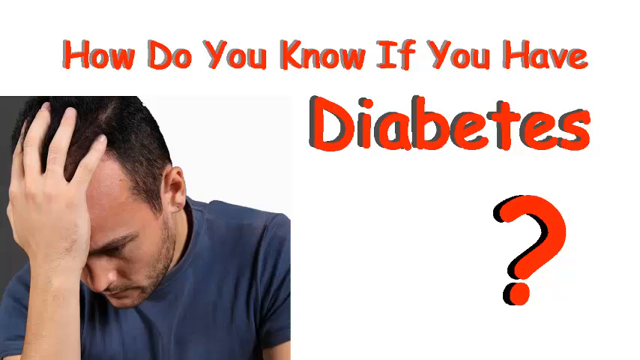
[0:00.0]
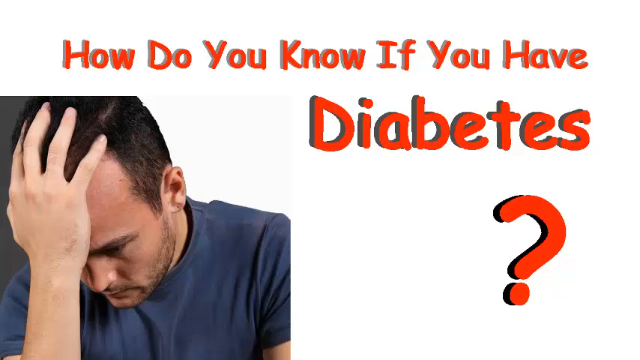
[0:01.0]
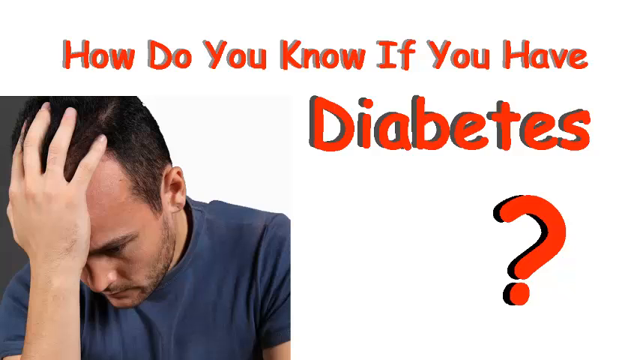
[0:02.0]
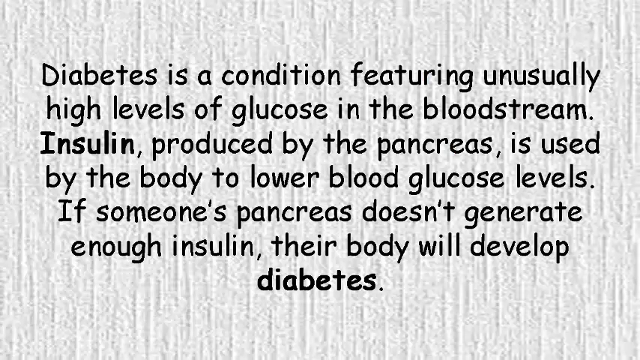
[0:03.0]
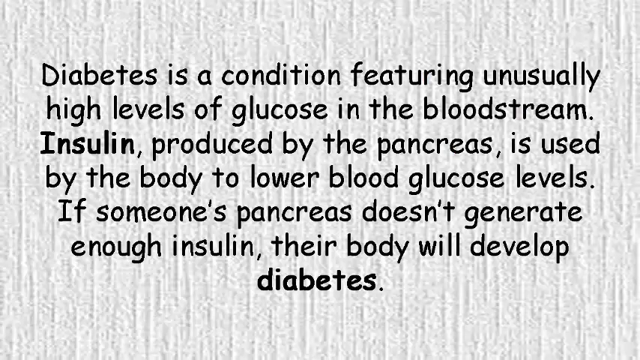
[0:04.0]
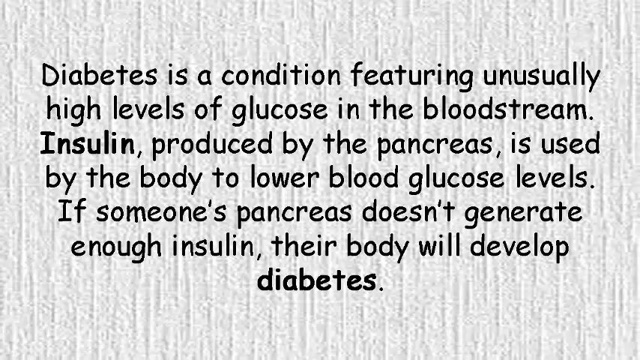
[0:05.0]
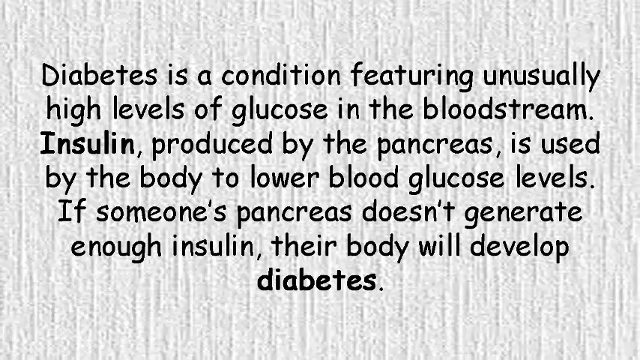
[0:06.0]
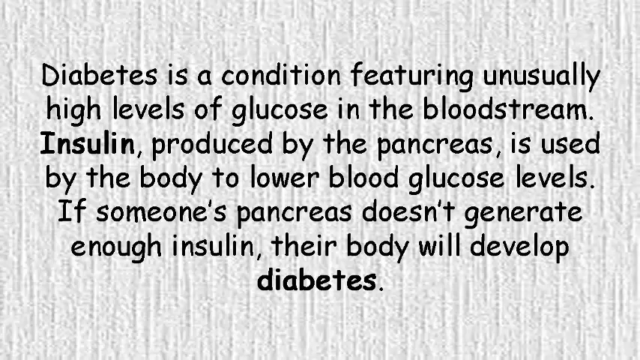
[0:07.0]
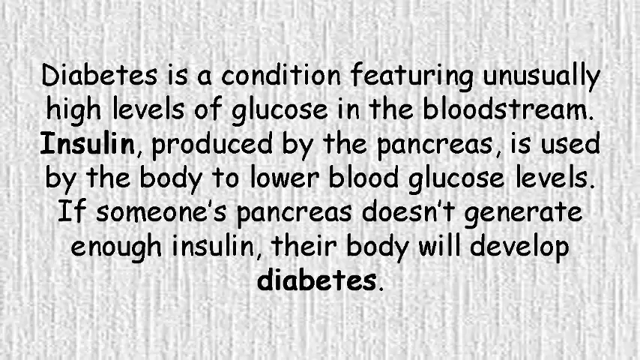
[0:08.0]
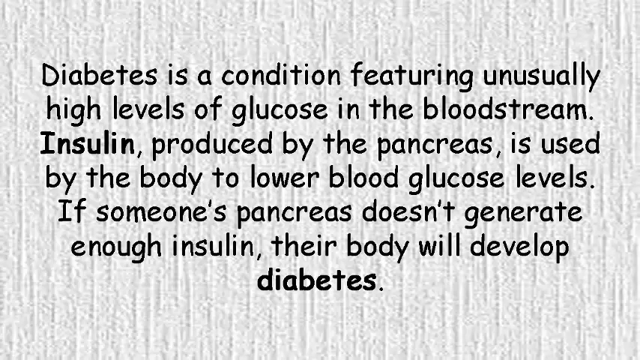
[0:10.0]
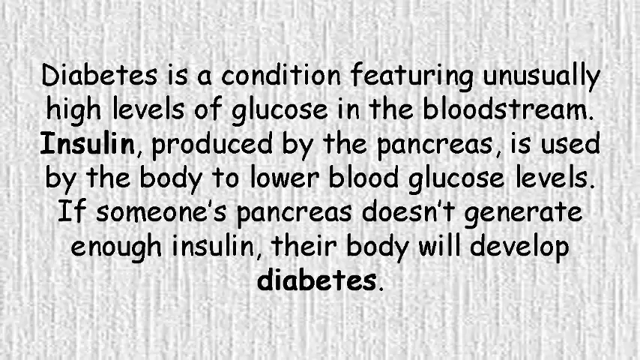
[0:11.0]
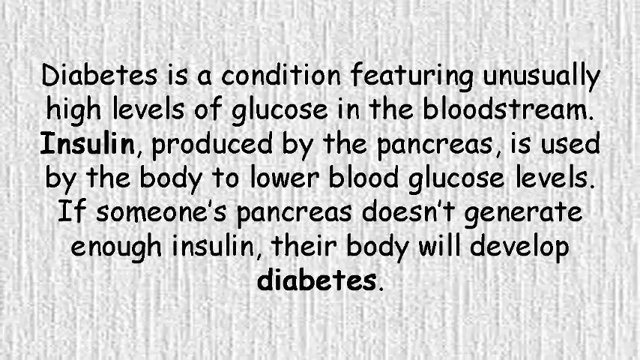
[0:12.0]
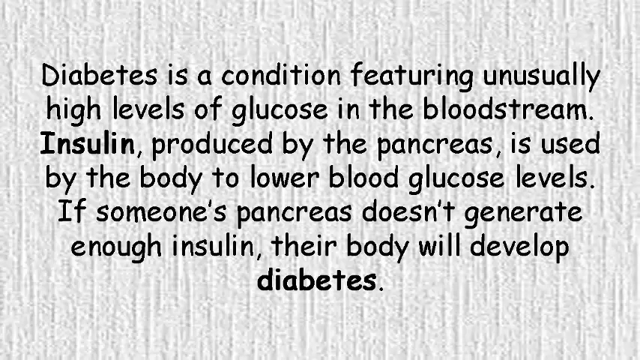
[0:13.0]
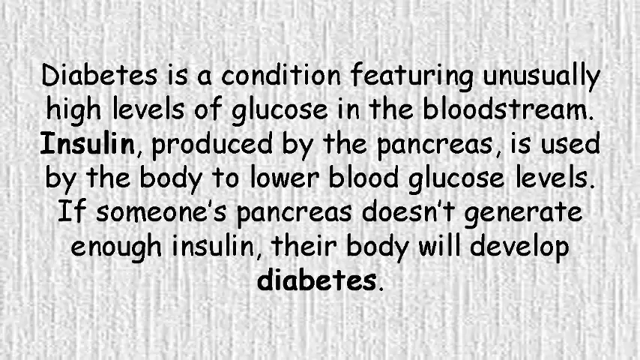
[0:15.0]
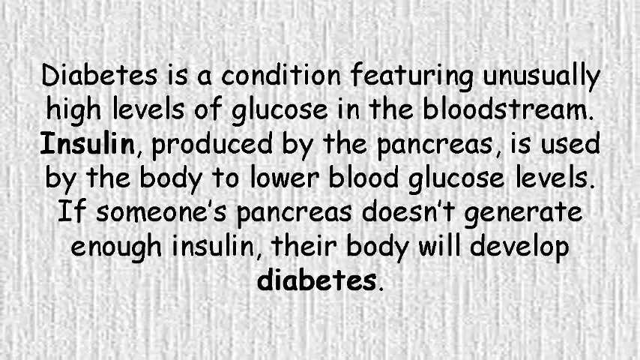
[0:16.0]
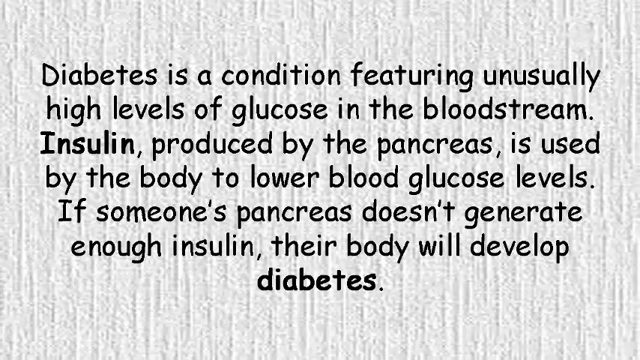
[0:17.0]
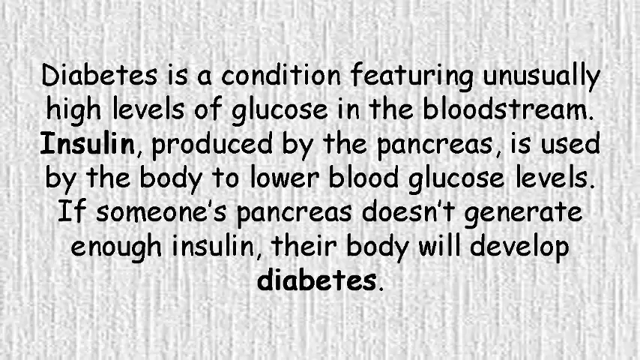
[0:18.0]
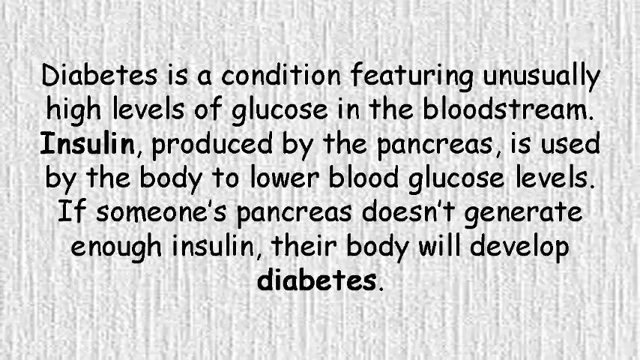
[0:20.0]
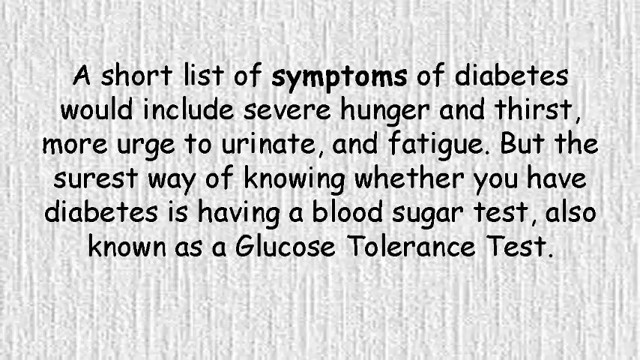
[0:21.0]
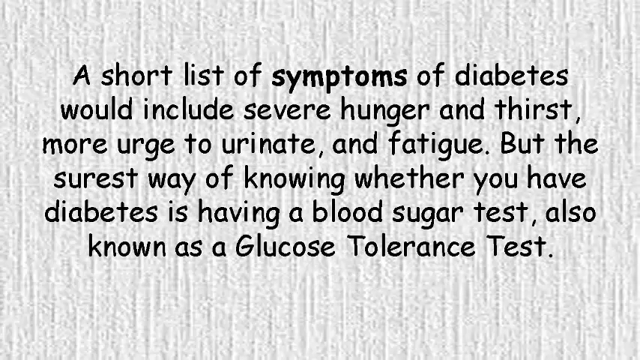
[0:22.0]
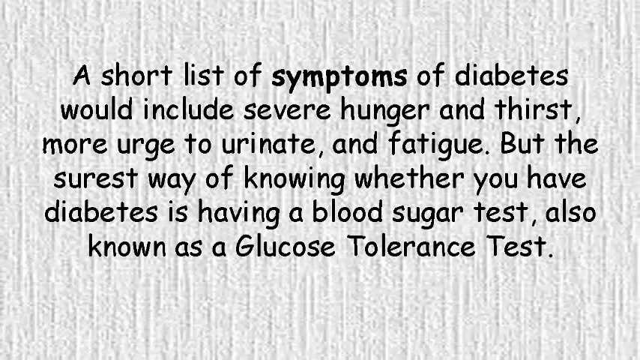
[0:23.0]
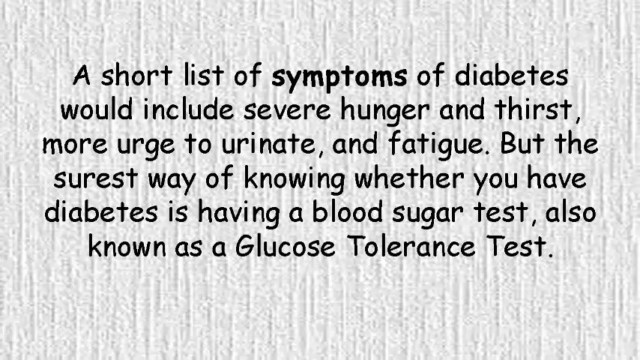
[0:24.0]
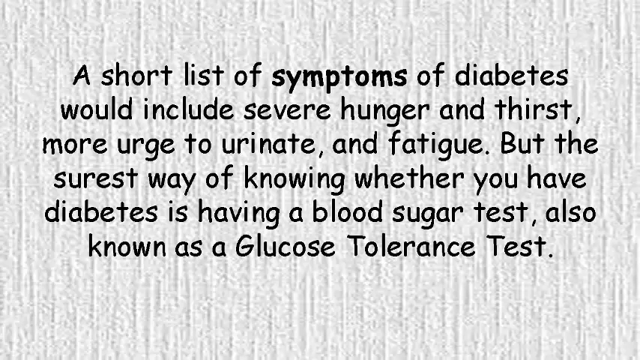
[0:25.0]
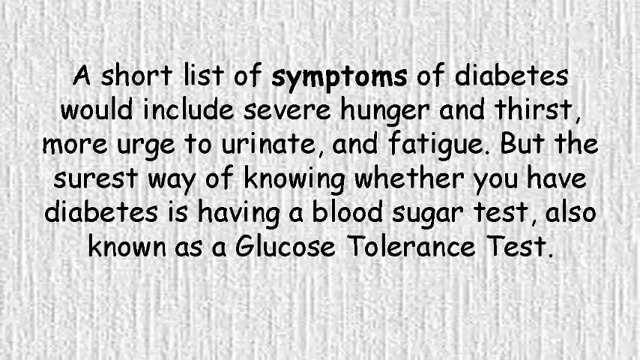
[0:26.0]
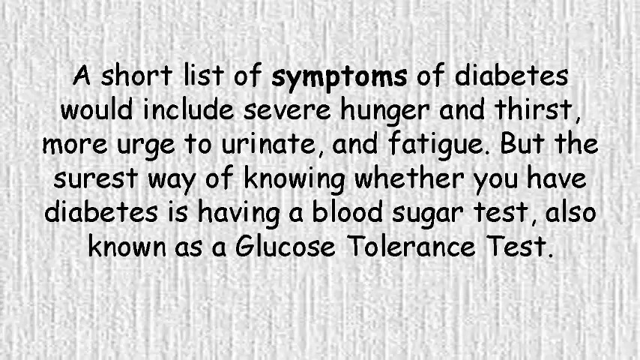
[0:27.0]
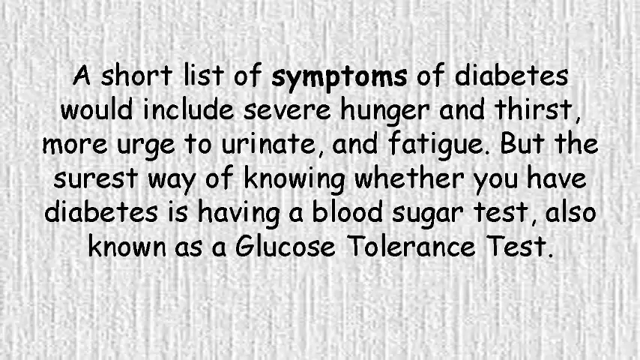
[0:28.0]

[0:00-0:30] A man appears with his head in his hands, as if upset about something. He is shown from just above the elbows up and wears a blue t-shirt. His right hand is up with the palm against his forehead and the fingers splayed out, and he is looking downward. He has a kind of five o'clock shadow, closely cropped brown hair, and a kind of worried expression. This image is on the left-hand side of the screen, kind of in a square box. Above it the text reads "how do you know if you have", below that "diabetes", and below that a question mark, all in red text against a white background. The screen then changes to a white background that is almost textured, with black text reading: "Diabetes is a condition featuring unusually high levels of glucose in the bloodstream insulin produced by the pancreas is used by the body to lower blood glucose levels. When a person's pancreas doesn't generate enough insulin their body will develop diabetes." The words "insulin" and "diabetes" are in a darker bold than the rest of the text. This stays on screen for a few moments, then the paragraph changes to a new one: "A short list of symptoms of diabetes would include severe hunger and thirst more urge to urinate and fatigue but the surest way of knowing whether you have diabetes is having a blood sugar test also known as the glucose tolerance test." The word "symptoms" is in bold.